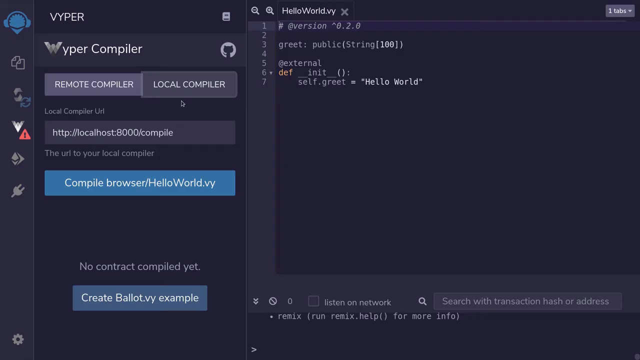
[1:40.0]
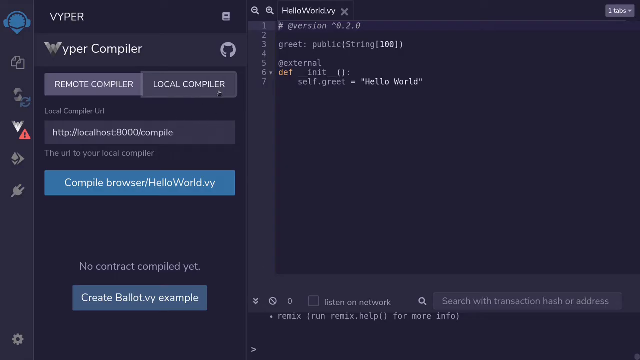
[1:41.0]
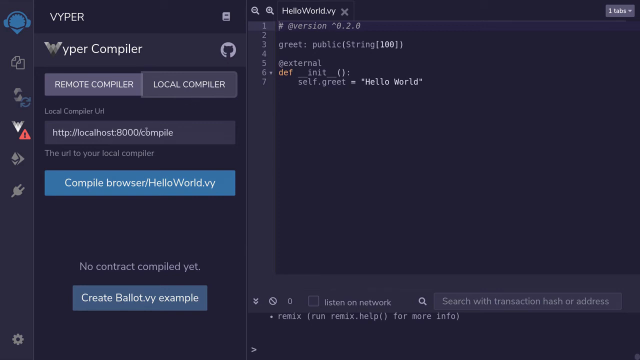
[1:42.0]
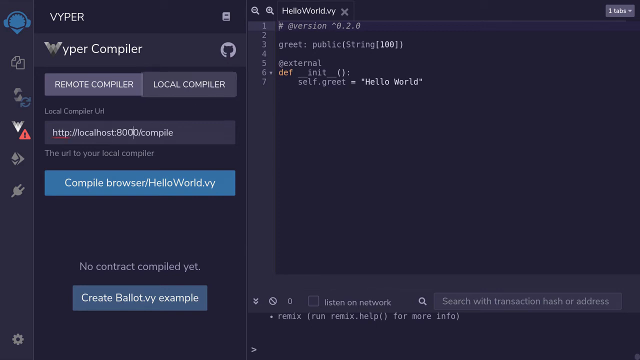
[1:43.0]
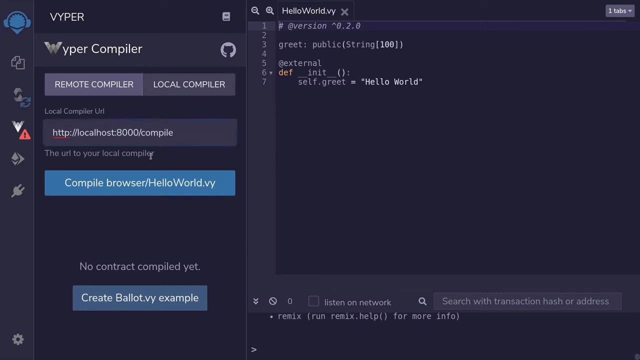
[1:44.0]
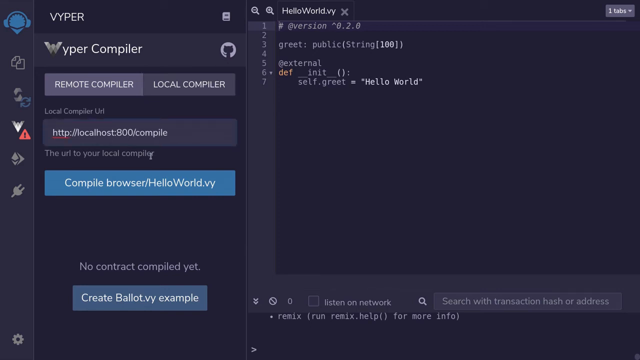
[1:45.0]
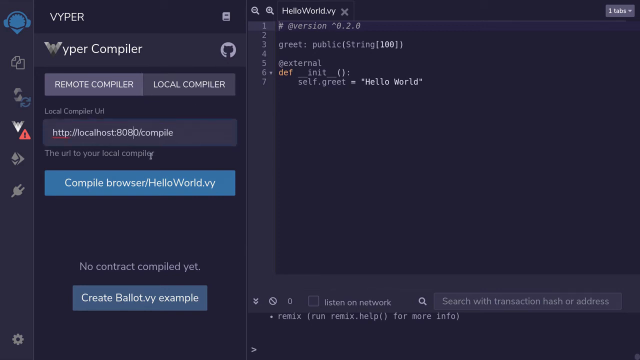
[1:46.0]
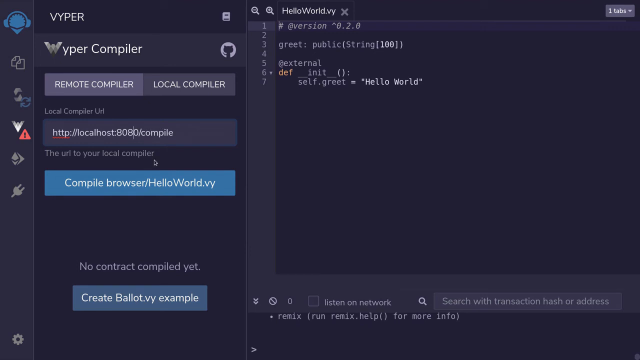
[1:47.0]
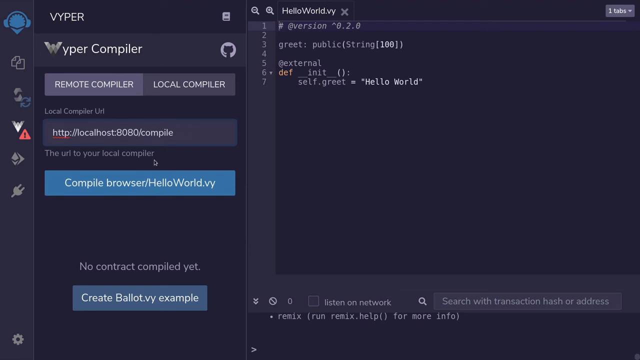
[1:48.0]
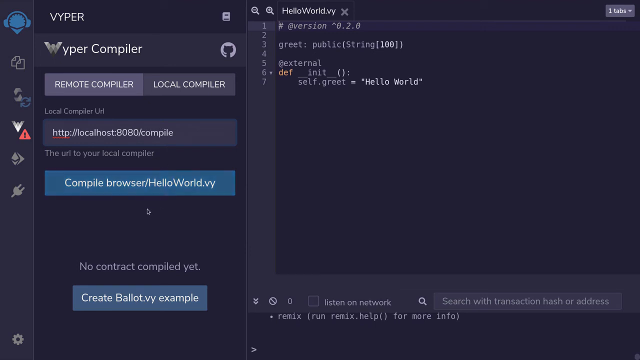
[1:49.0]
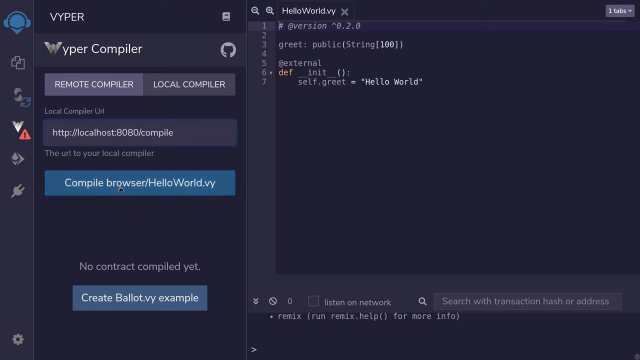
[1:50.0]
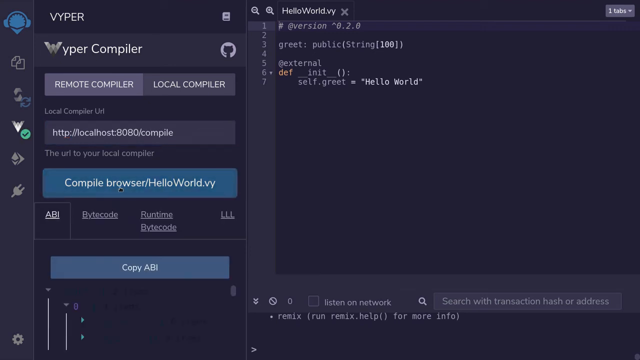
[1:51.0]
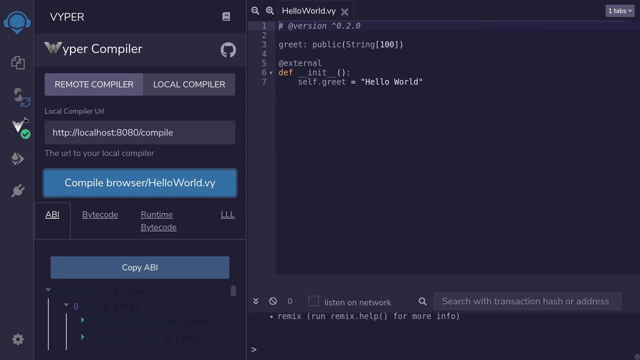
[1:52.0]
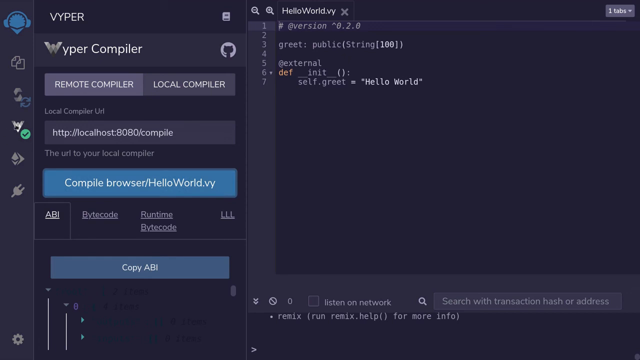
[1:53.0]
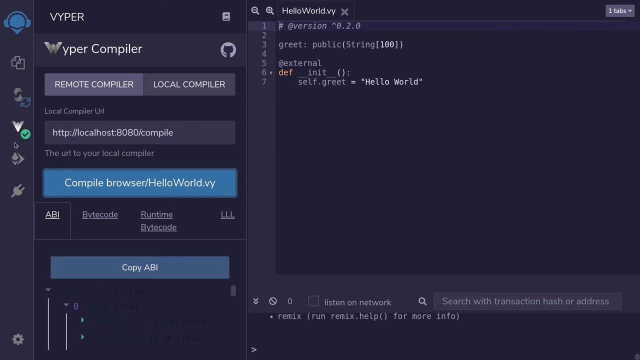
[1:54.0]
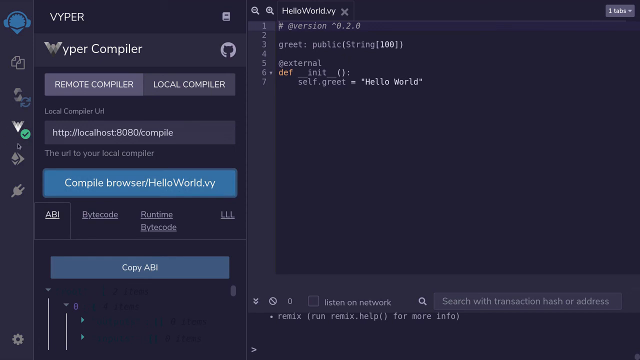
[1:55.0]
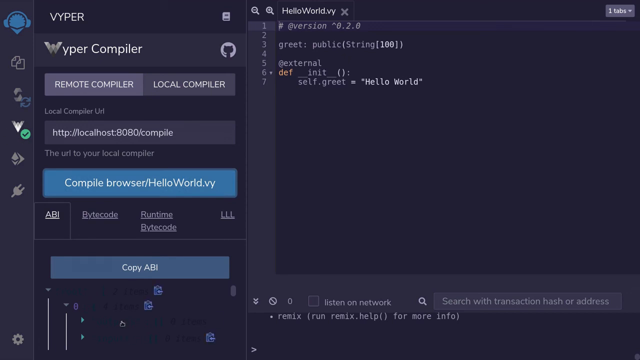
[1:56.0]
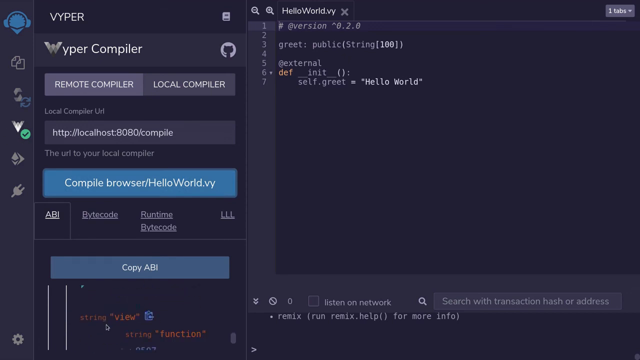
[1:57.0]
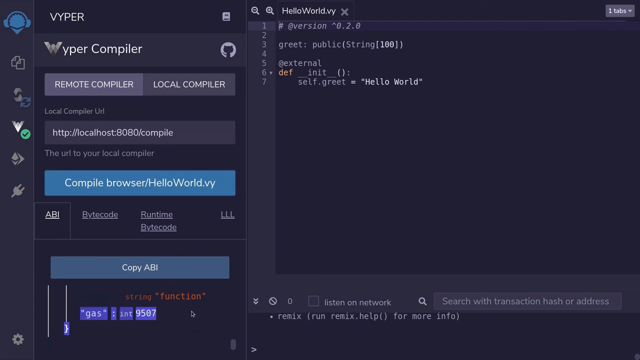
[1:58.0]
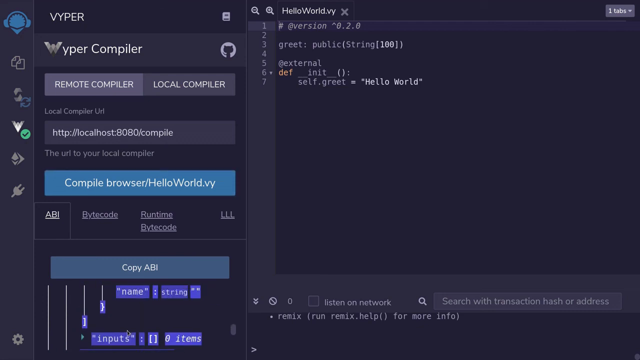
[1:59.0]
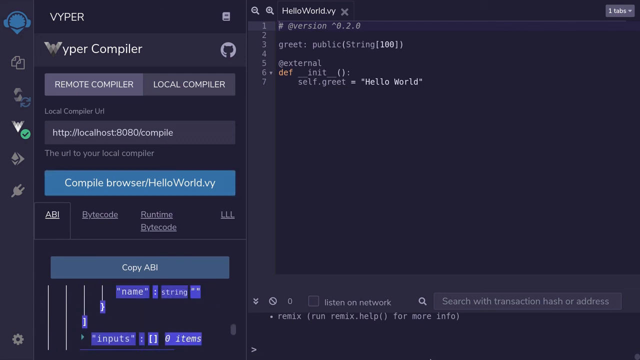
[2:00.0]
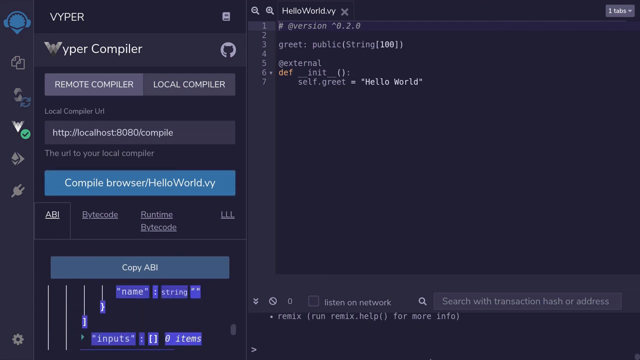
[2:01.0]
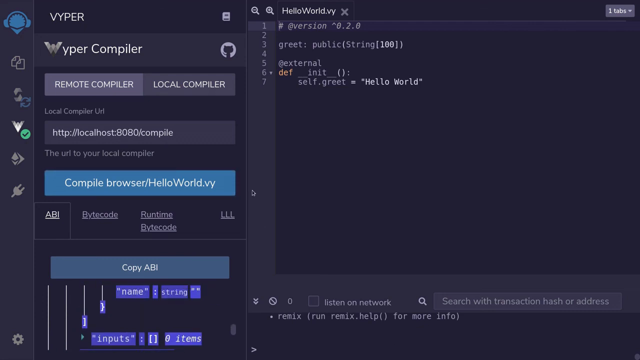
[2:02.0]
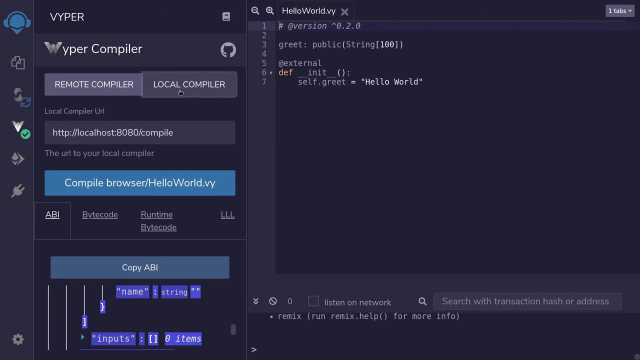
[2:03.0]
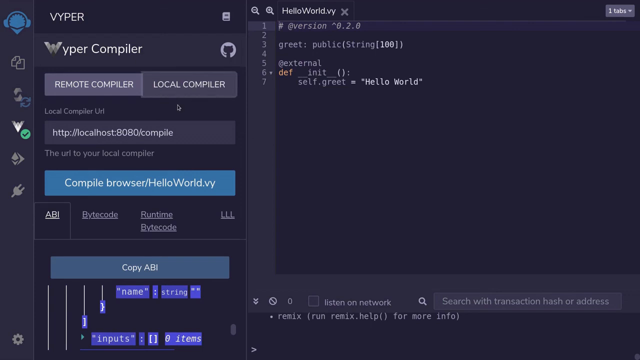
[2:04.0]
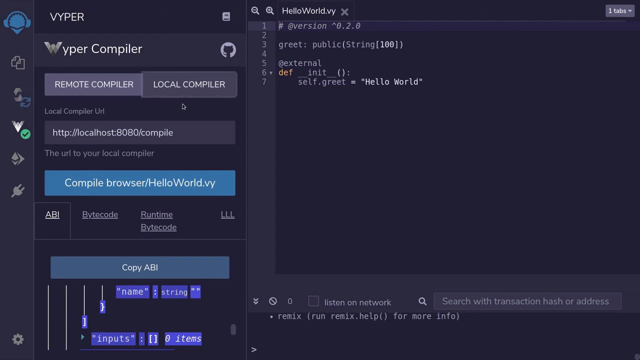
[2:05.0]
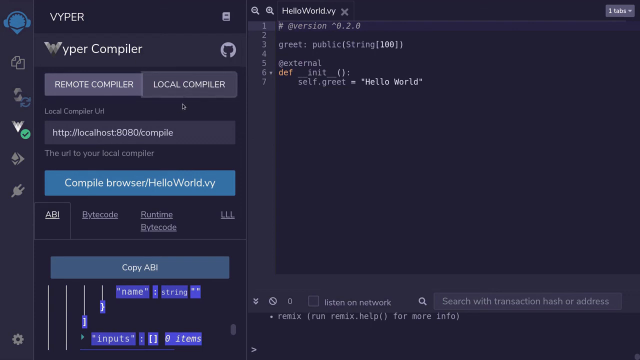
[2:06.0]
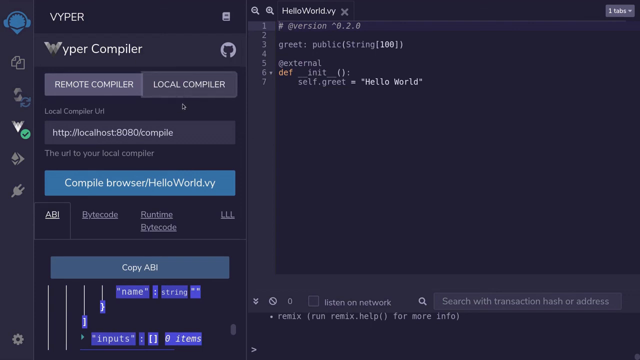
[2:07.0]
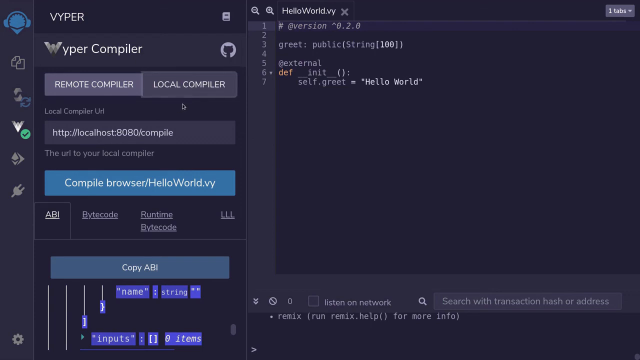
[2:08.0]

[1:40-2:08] In the local compiler URL, the number is changed from 8000 to 8080. After completing the local compiler URL, the process moves to the next URL for compiling. It now works correctly: compile browser, or hello world.py, is pressed and shows that it is working. Everything can now be compiled together and the ABI can be copied, whereas at first the calls and the ABI did not show.